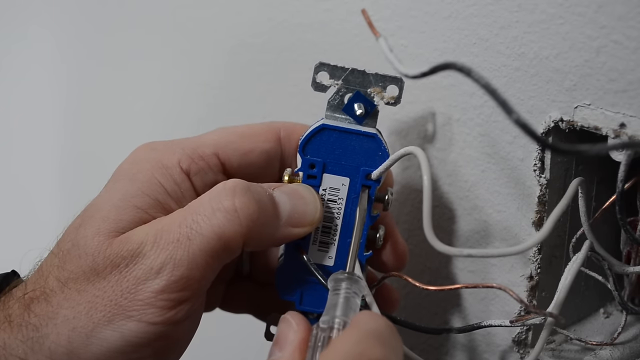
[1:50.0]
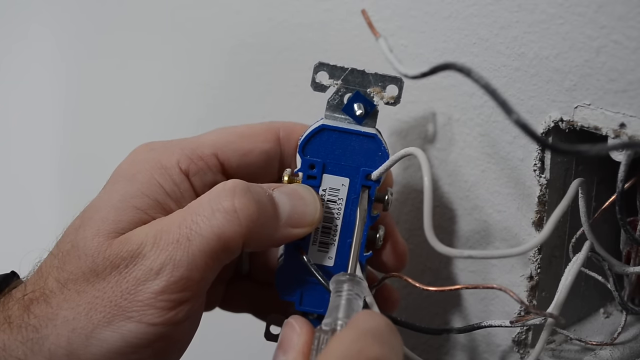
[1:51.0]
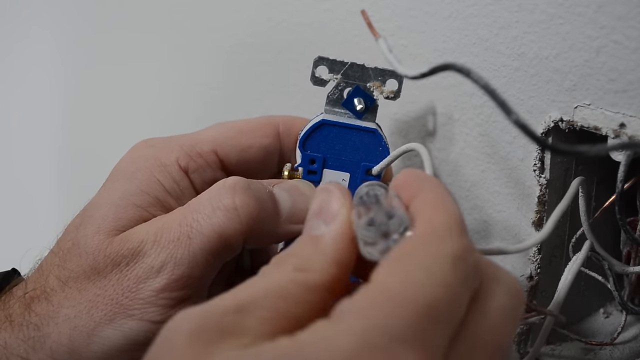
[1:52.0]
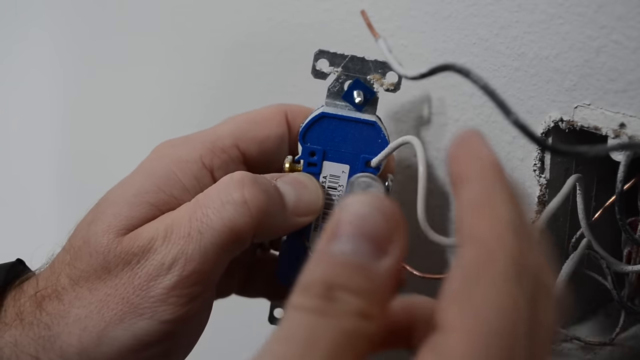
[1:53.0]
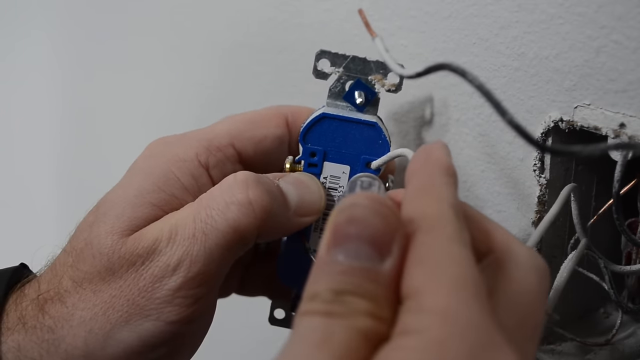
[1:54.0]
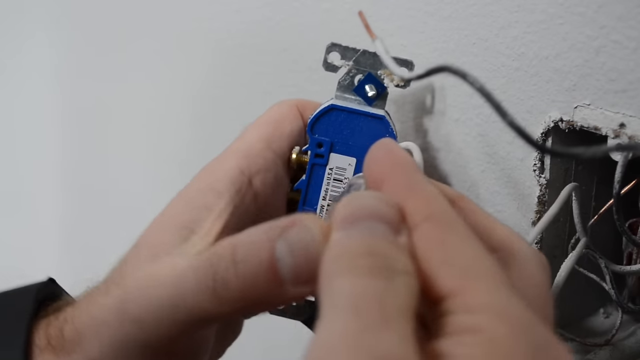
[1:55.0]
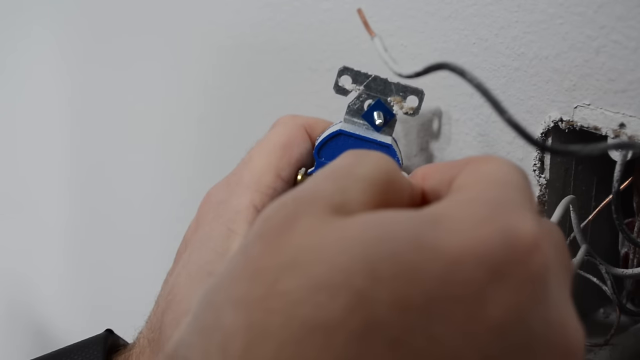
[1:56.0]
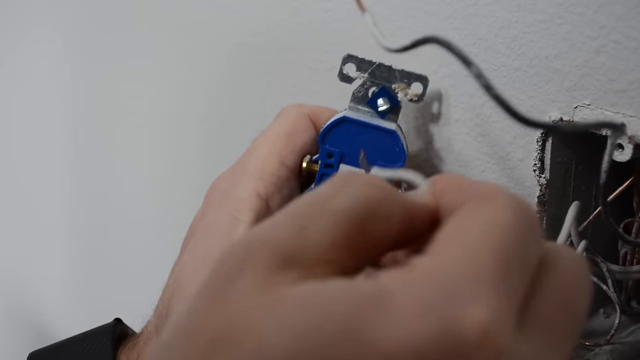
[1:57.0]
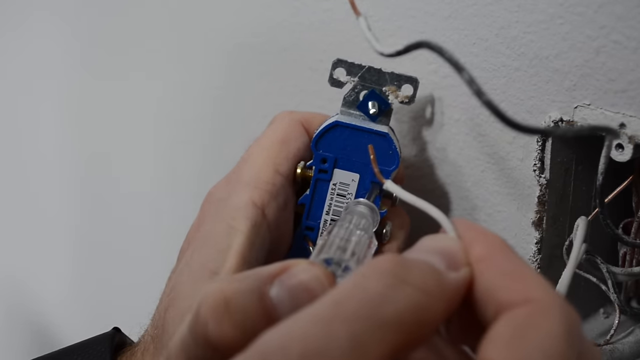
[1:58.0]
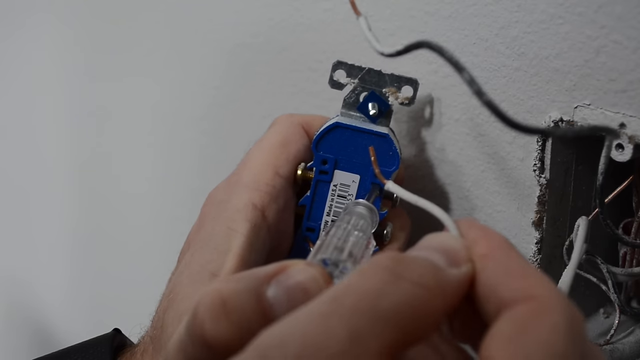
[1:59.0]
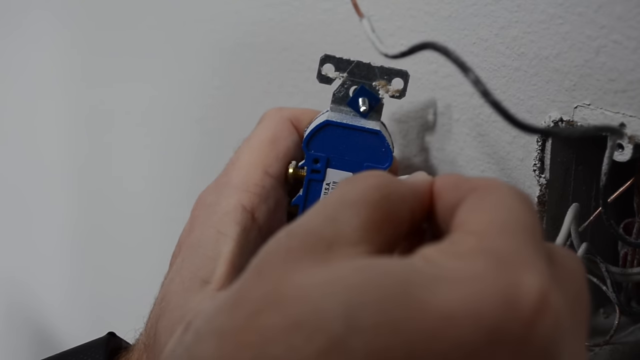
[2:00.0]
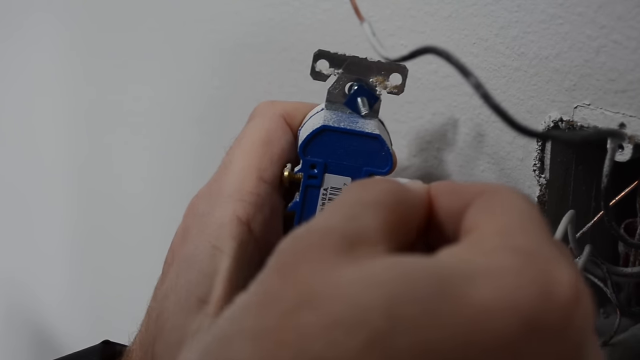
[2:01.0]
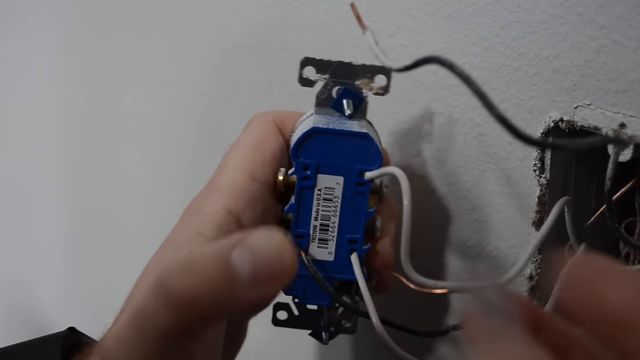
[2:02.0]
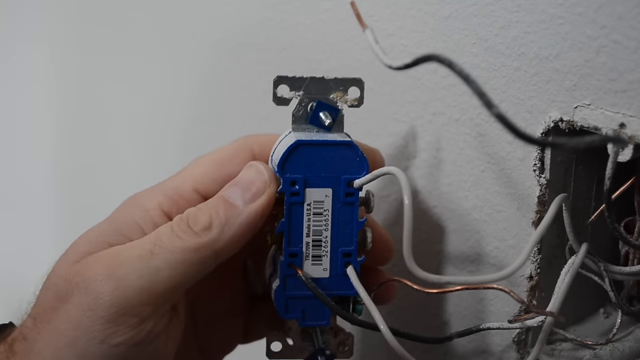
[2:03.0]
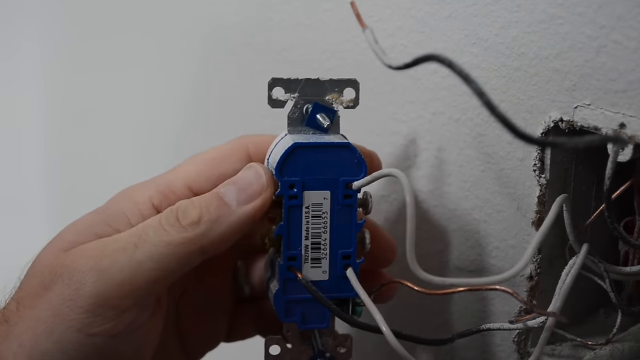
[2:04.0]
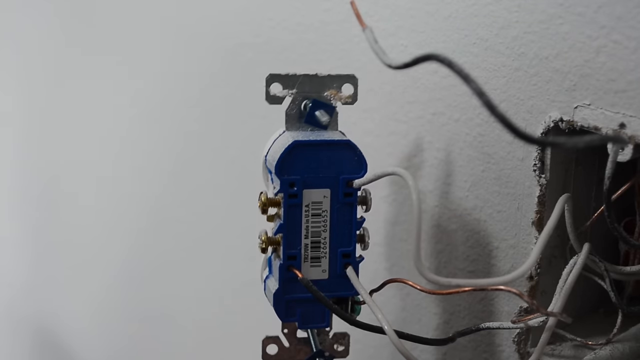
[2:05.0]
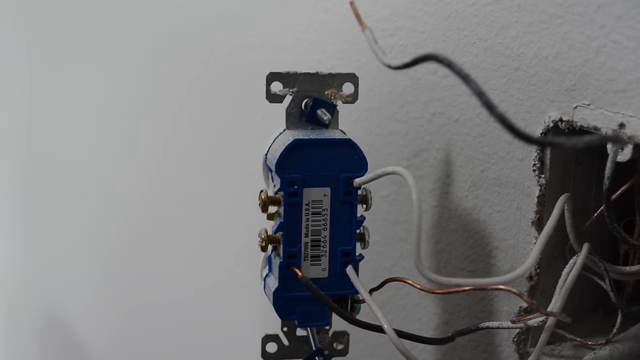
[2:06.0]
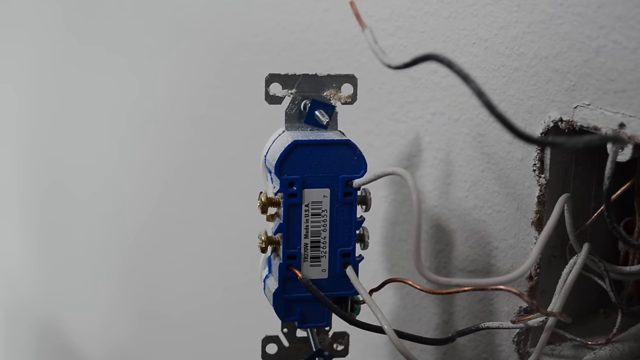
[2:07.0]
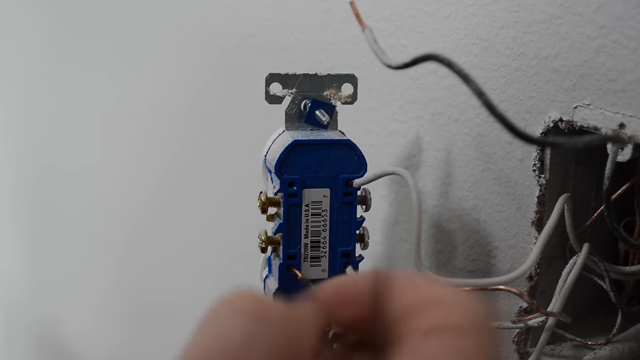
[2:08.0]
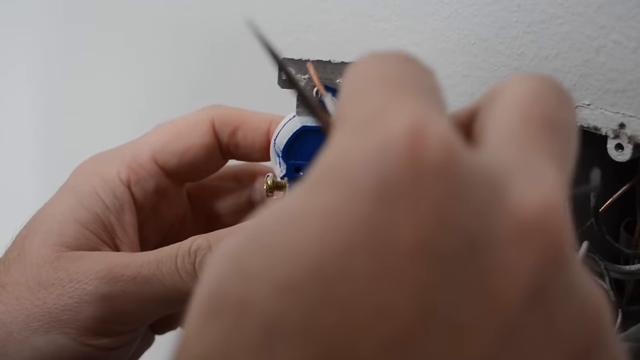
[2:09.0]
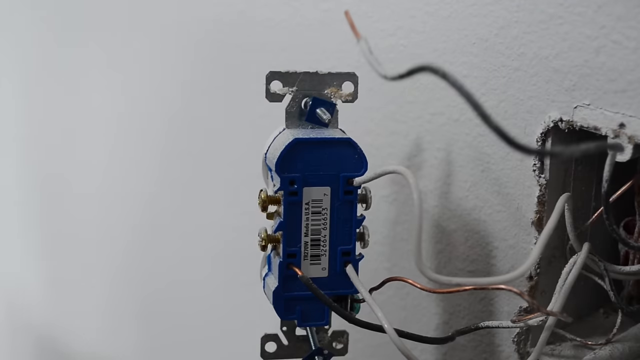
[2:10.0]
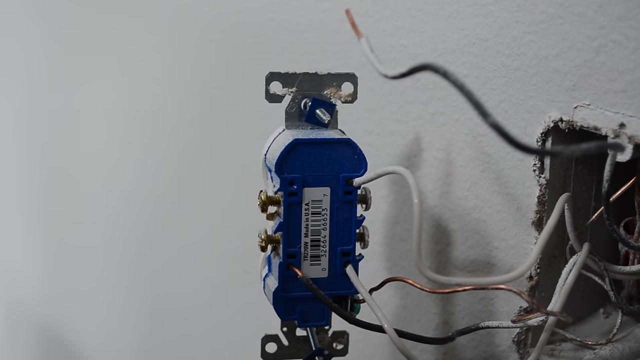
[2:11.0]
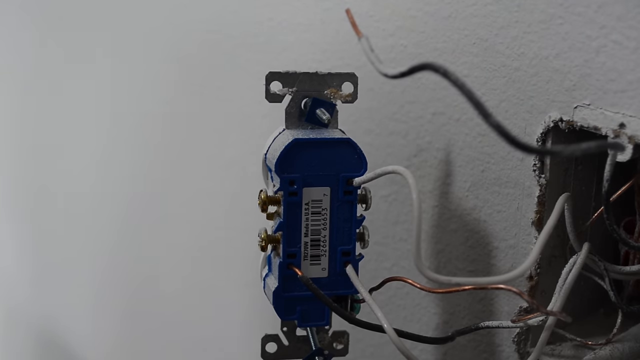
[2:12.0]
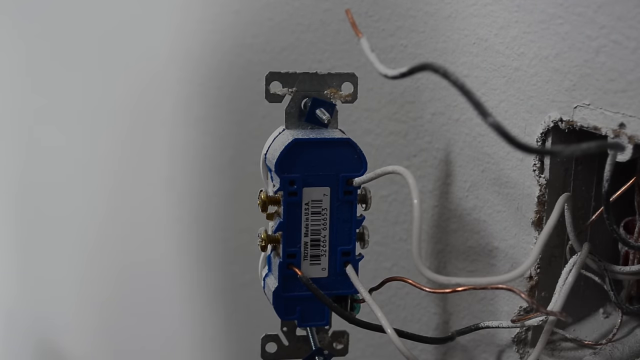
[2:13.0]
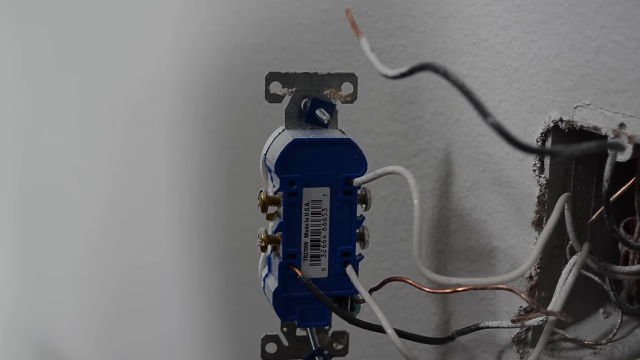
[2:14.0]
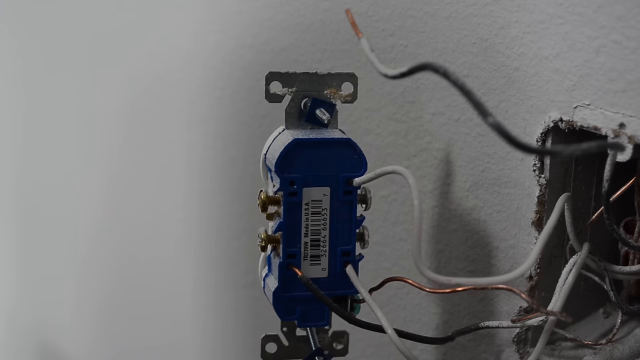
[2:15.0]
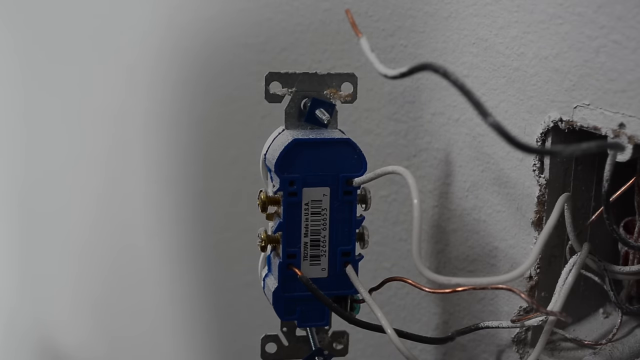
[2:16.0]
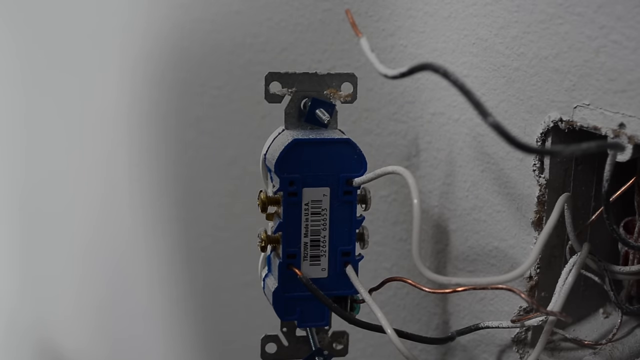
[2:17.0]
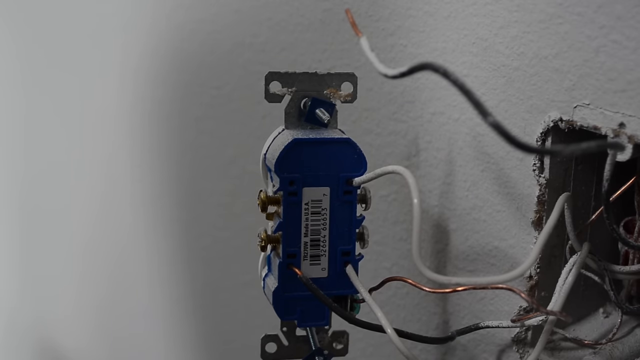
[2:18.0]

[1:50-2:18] Two wires are already off as the man shows the screwdriver and how he puts it in the hole. There are two unscrewed screws on the side. The wires are out, and he shows the size of the screwdriver used.